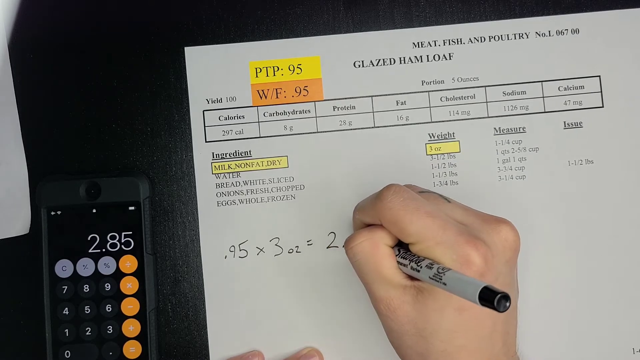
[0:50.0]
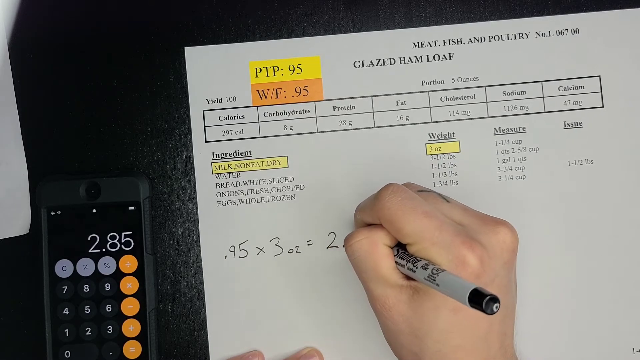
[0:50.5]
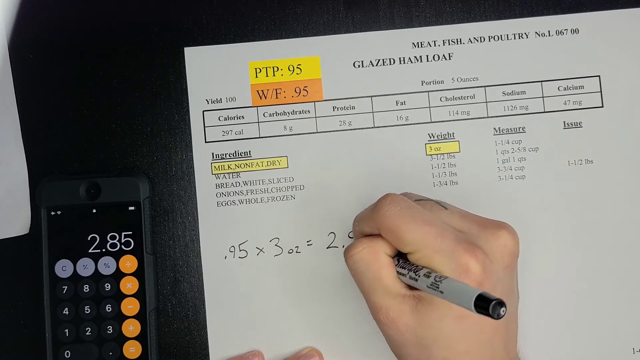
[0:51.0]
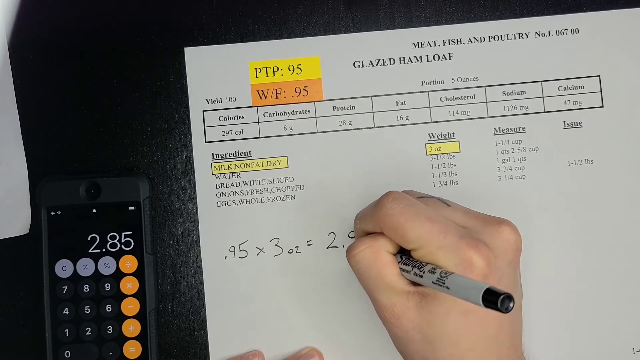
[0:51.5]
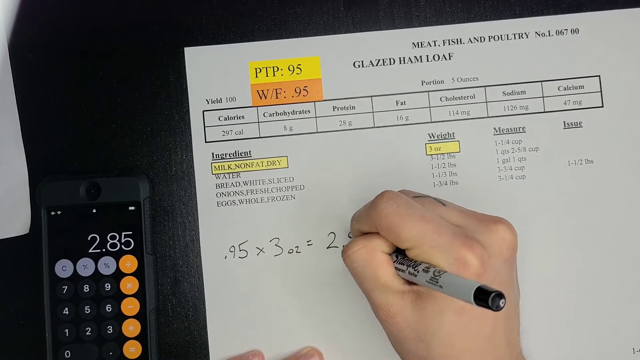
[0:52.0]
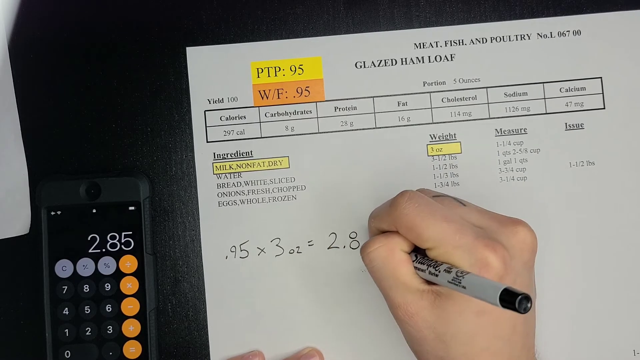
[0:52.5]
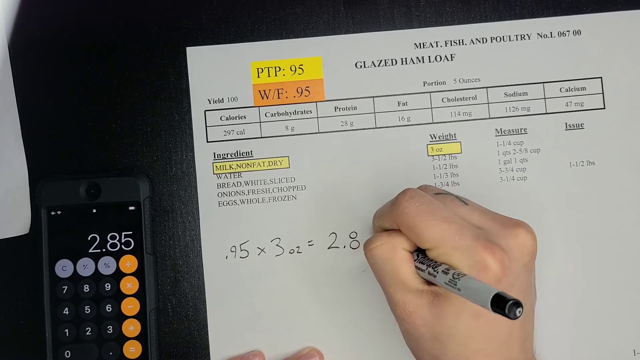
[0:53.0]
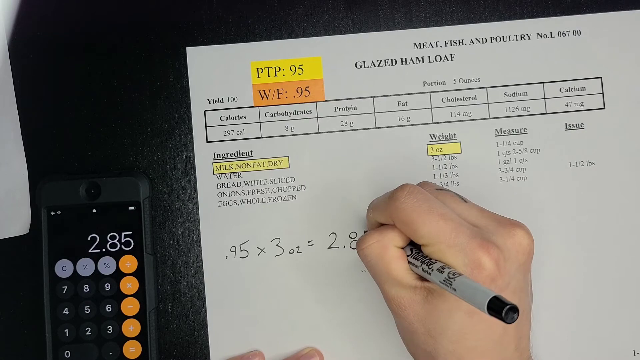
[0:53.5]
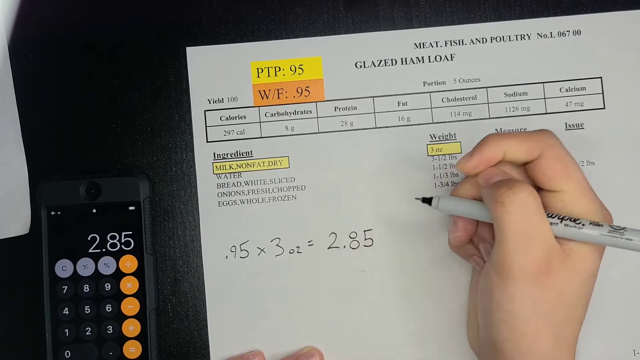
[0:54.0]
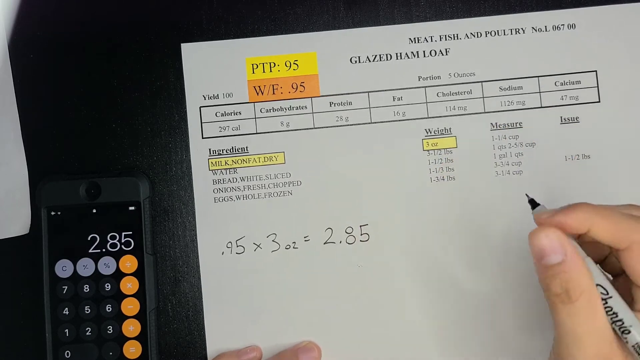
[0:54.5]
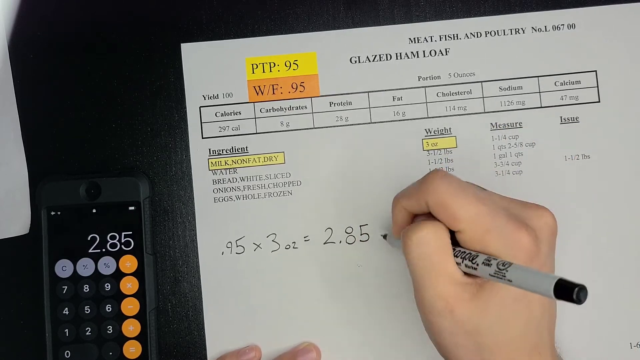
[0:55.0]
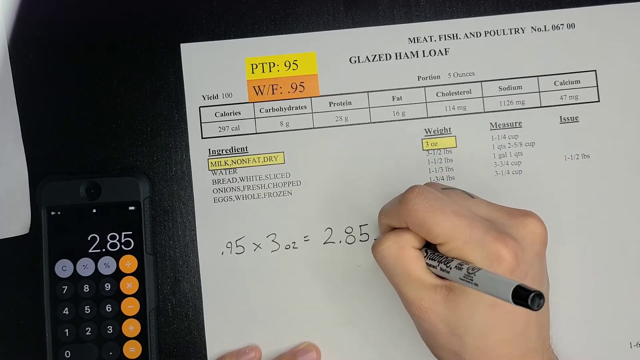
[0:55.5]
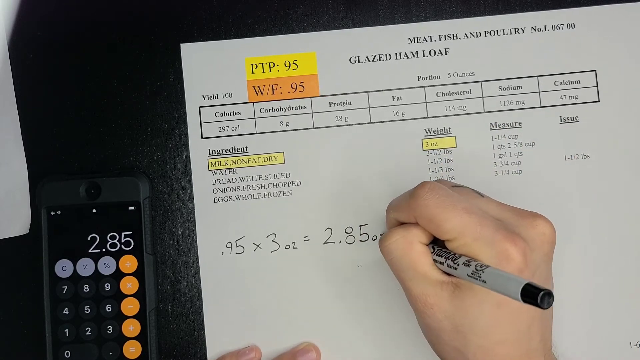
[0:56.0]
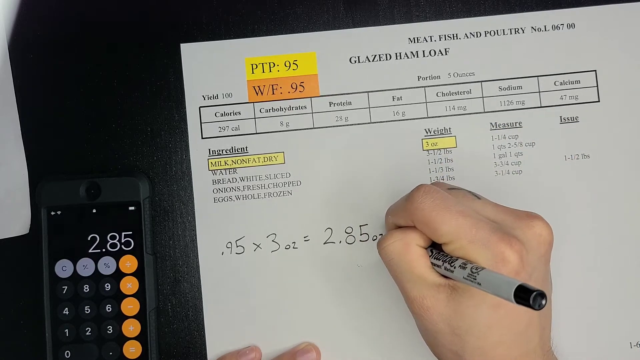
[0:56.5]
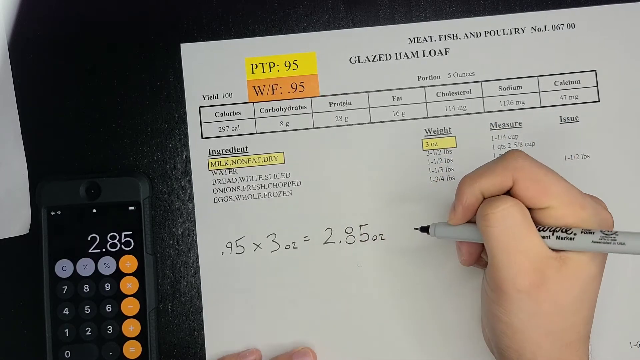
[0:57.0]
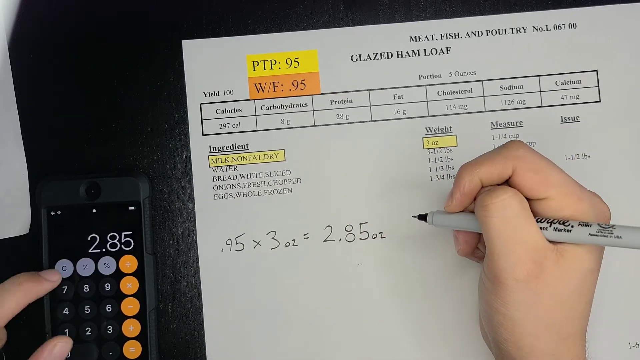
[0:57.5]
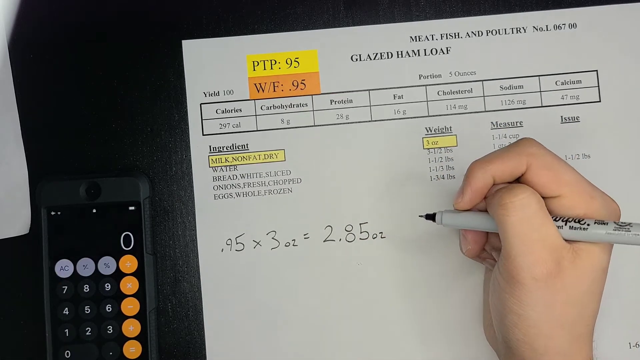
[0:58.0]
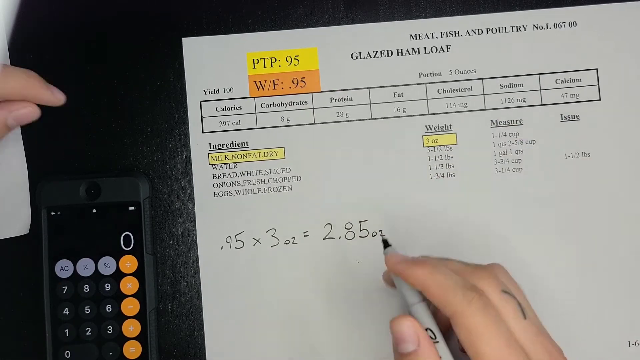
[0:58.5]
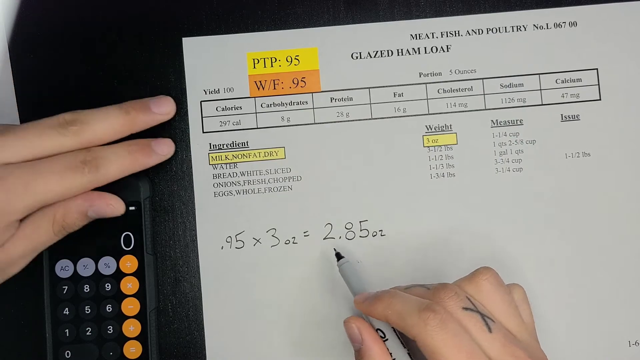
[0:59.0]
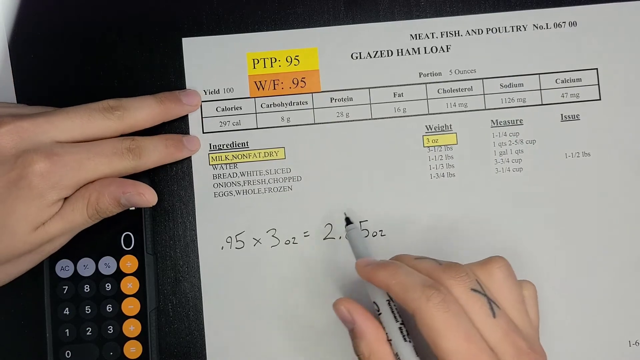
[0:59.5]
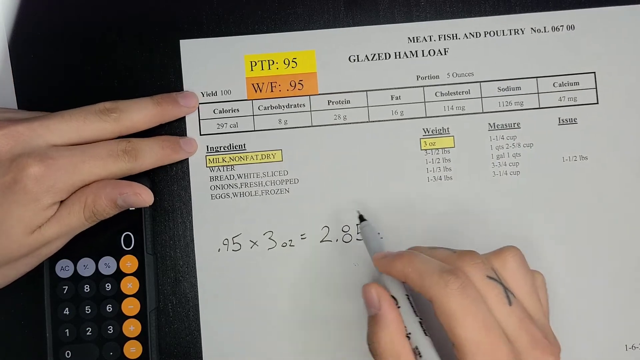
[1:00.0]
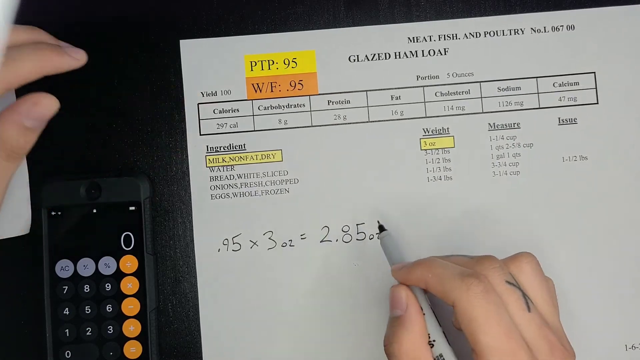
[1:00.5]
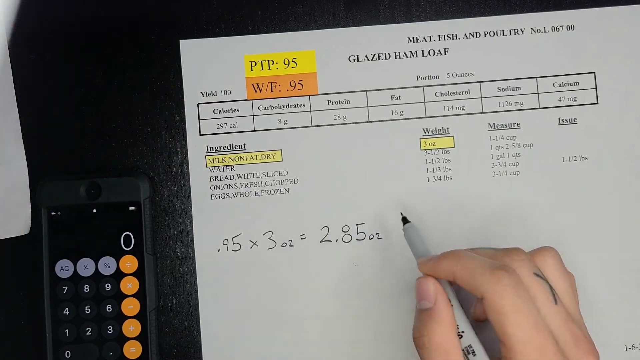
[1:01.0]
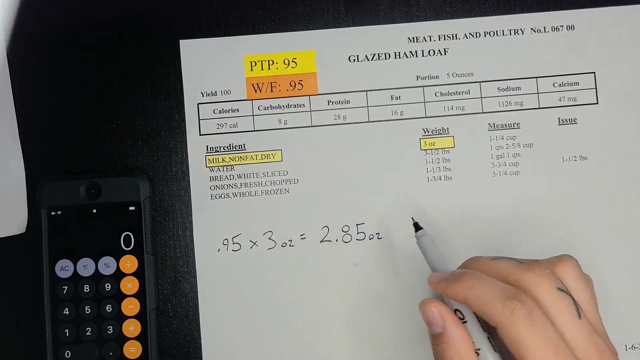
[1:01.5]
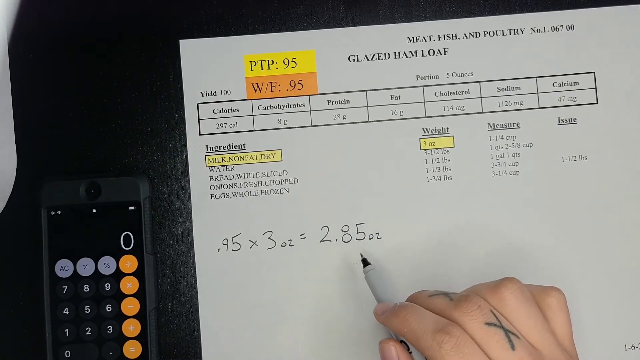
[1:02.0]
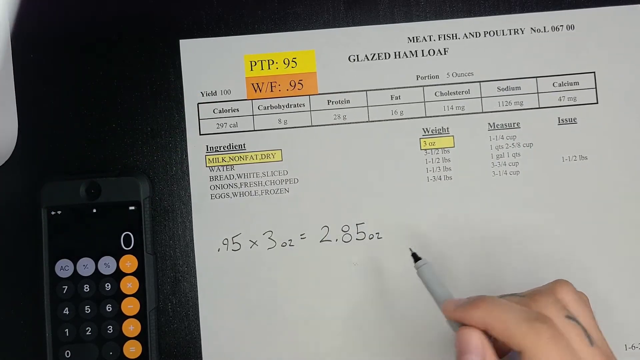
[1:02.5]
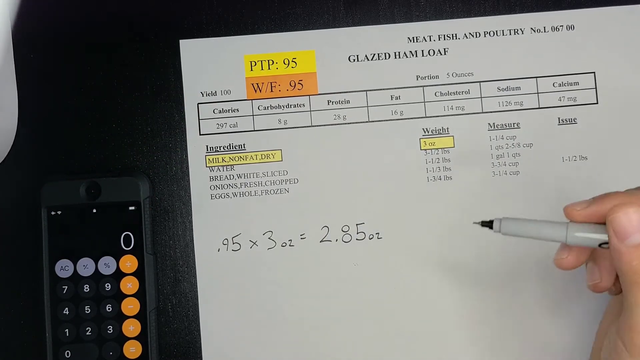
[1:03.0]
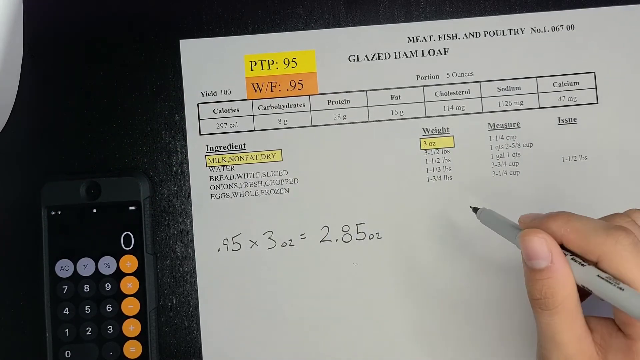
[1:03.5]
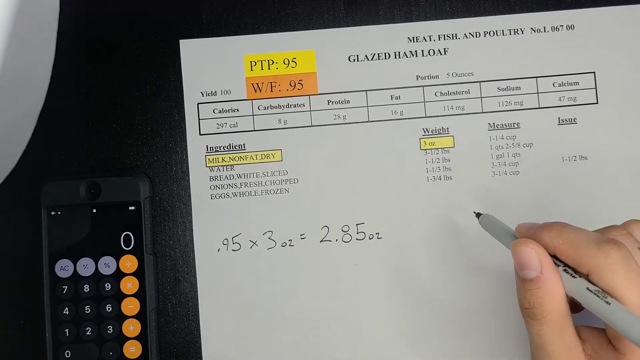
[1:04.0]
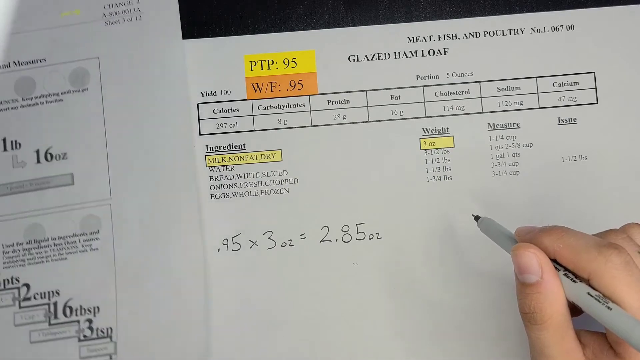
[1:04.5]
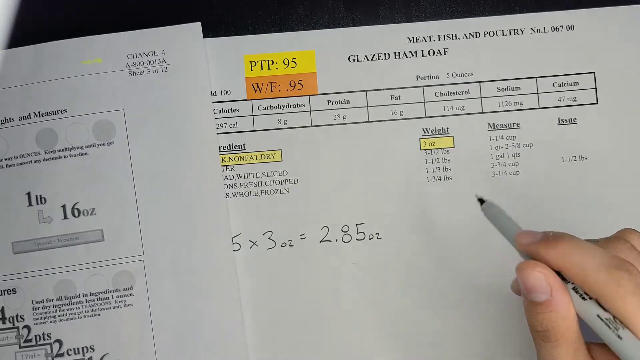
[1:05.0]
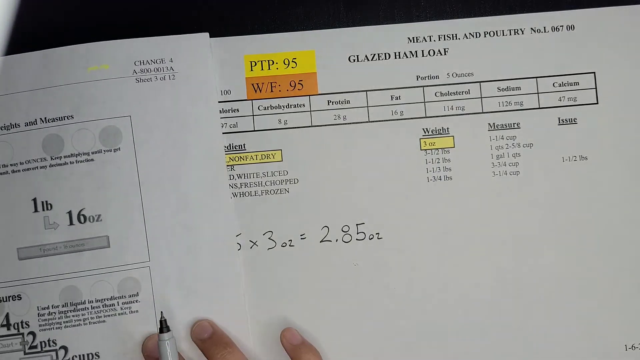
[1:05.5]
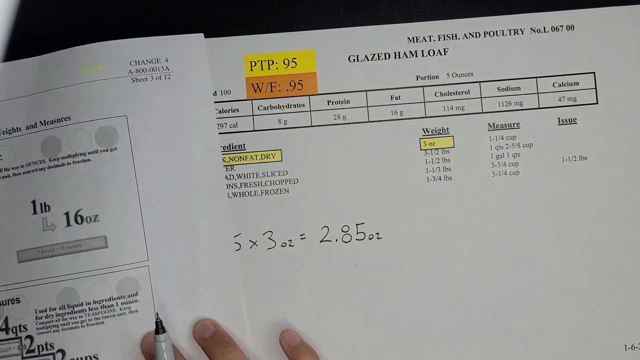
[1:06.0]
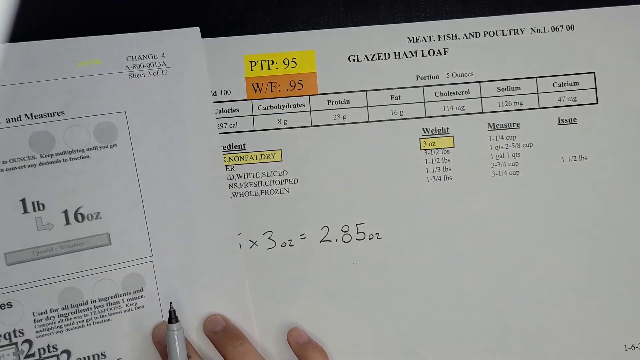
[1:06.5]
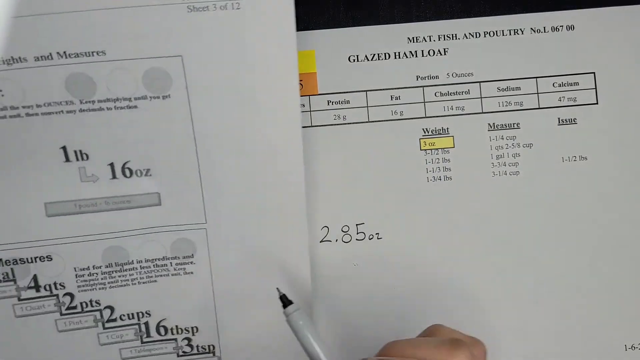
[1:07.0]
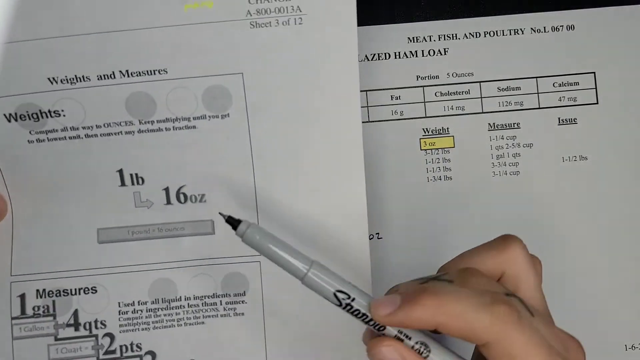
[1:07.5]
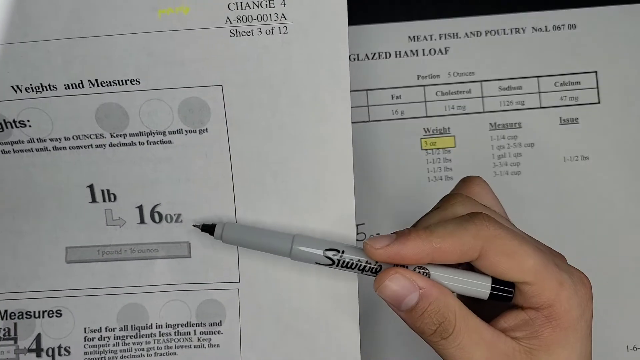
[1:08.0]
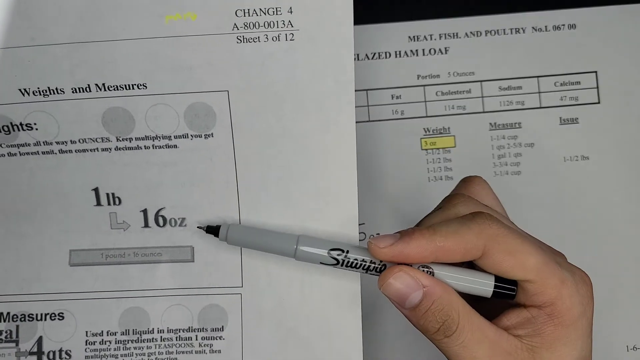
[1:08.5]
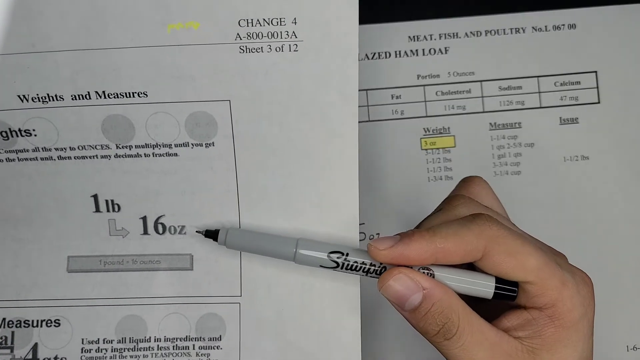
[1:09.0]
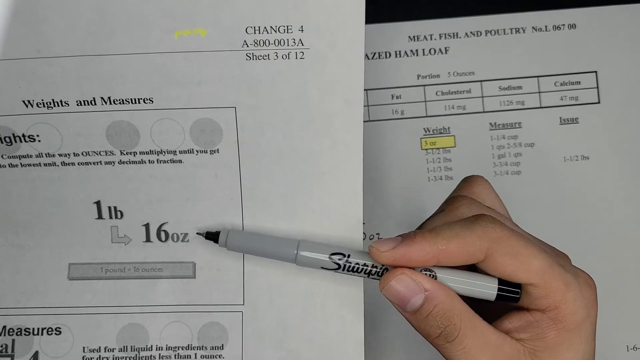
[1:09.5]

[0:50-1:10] Multiplying 0.95 by the 3 oz of milk gives 2.85 oz, and the water is also to be calculated with the PTP. The 2.85 oz is compared with a limit of 16 oz shown on the sheet.